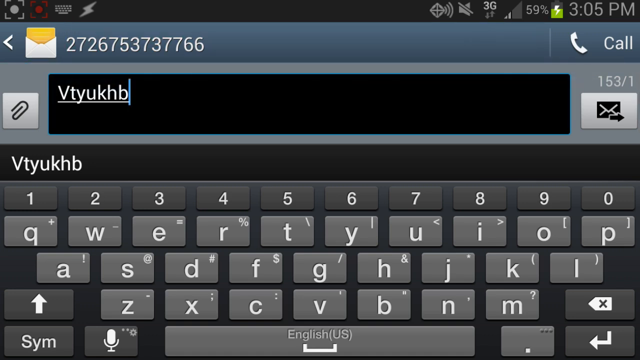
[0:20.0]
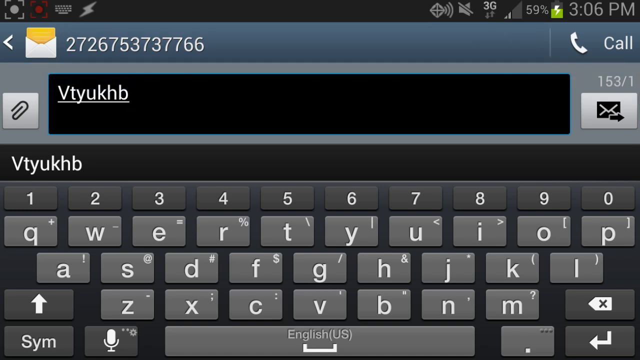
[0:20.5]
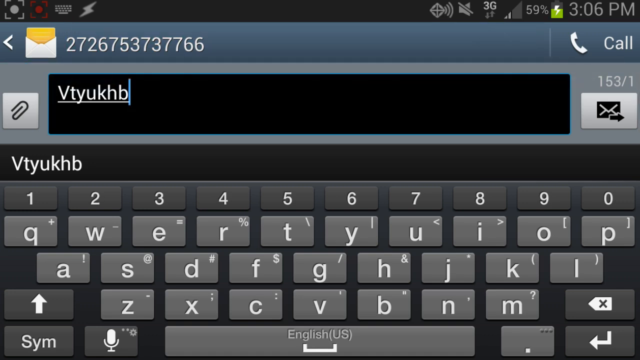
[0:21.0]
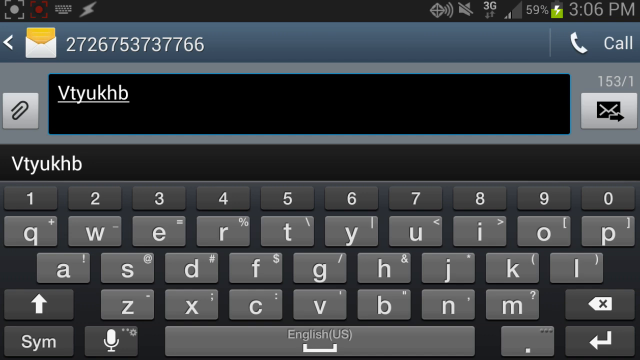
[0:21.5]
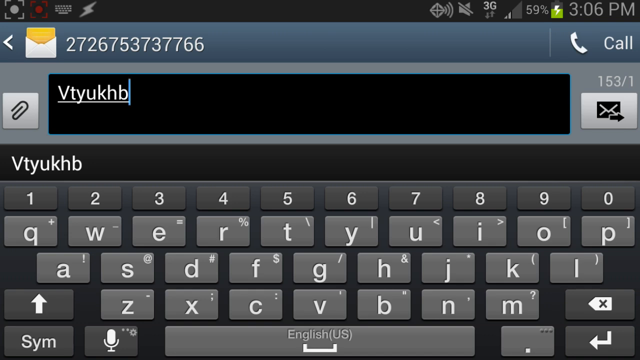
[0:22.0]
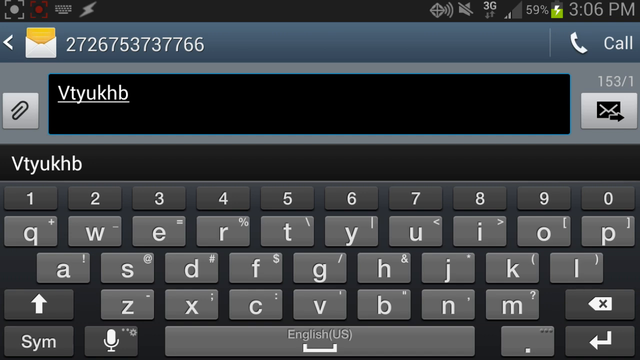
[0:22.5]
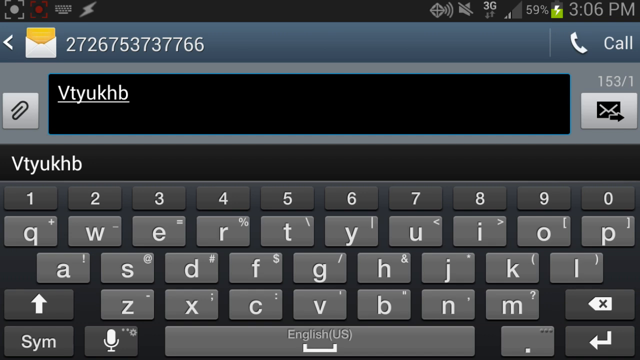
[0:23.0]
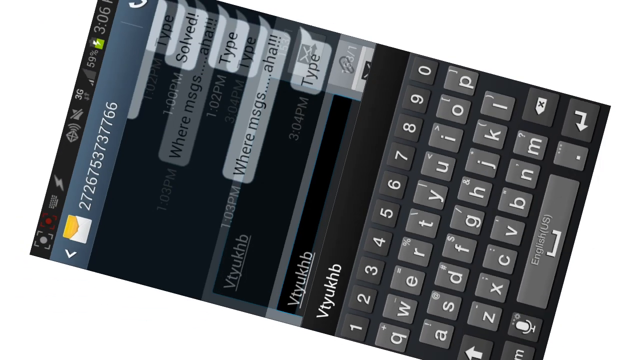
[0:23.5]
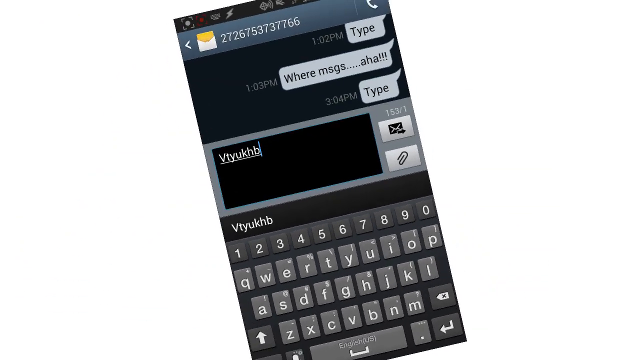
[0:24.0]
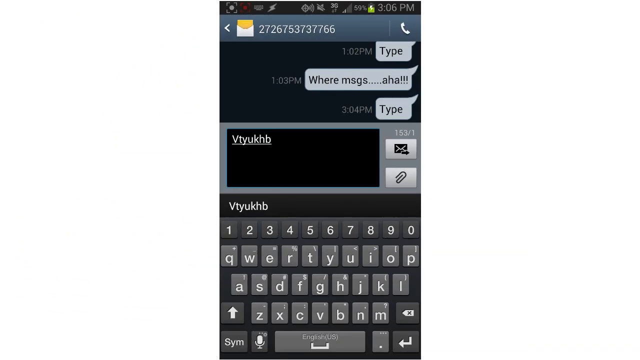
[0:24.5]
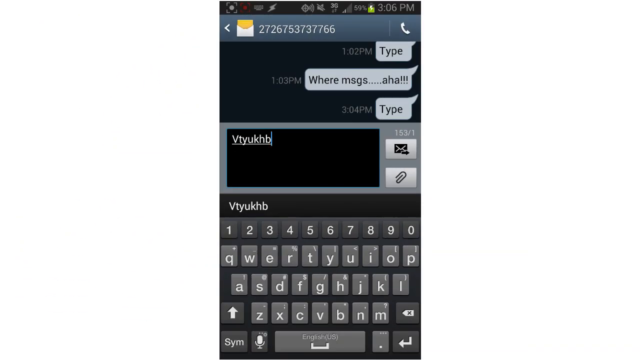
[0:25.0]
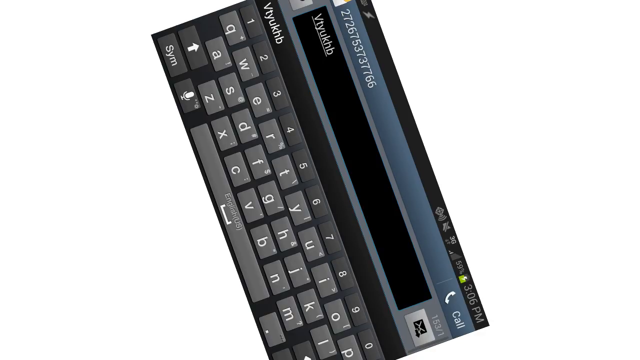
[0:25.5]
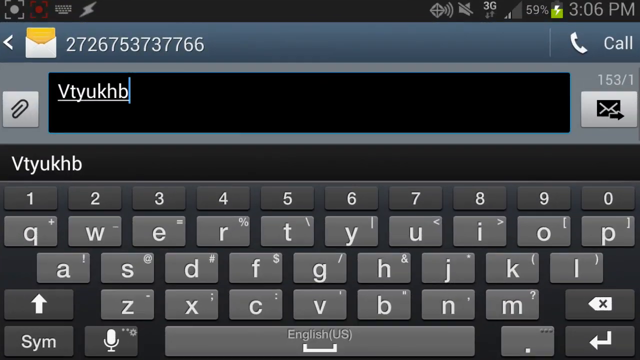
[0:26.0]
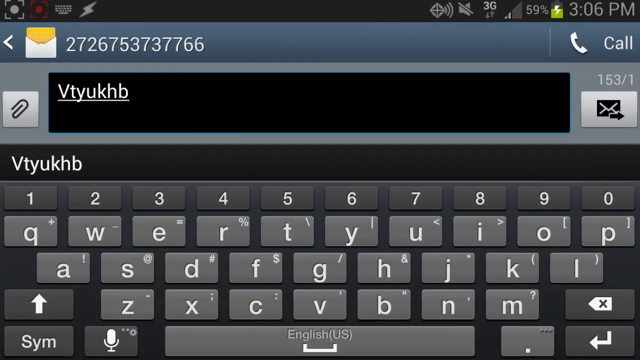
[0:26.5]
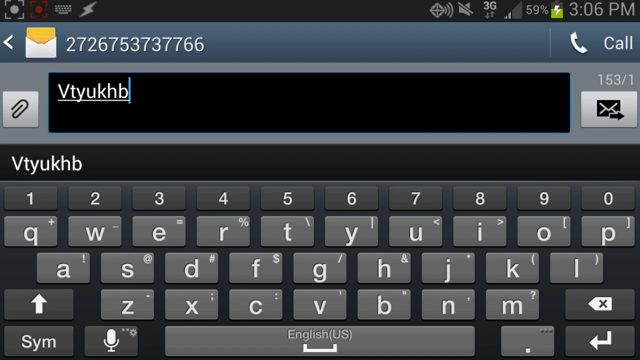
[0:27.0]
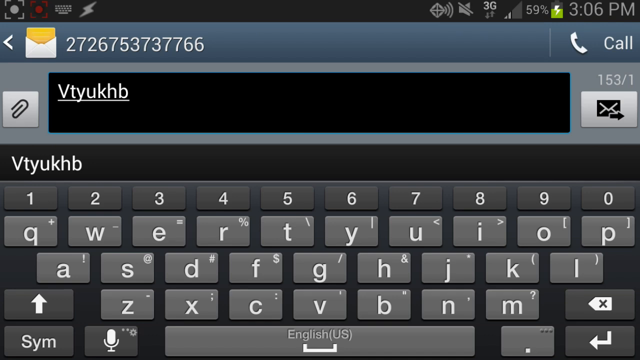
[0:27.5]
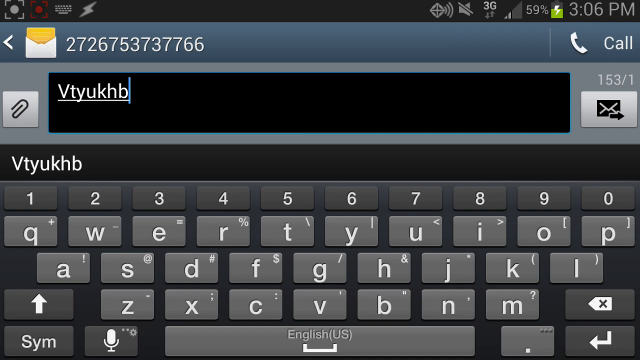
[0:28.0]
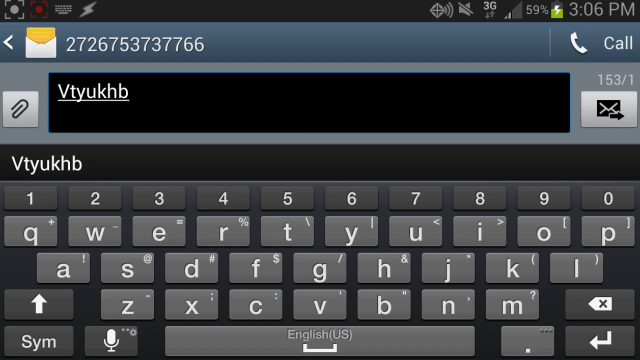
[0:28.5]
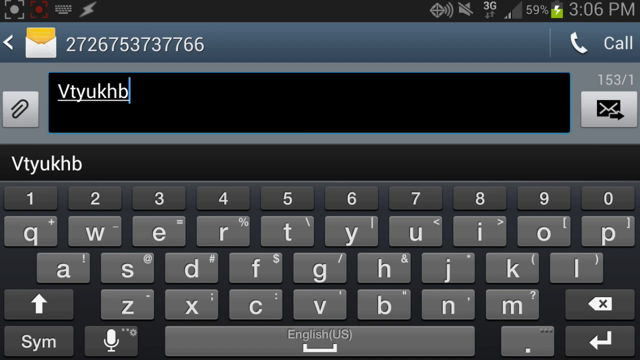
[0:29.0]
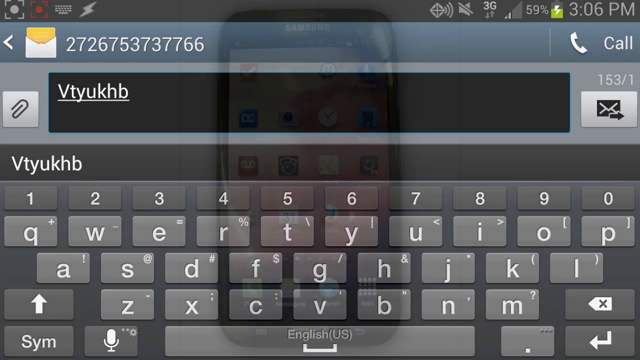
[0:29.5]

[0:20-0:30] Still in the horizontal orientation, typing continues. After a transition, possibly a built-in one, the screen is rotated back to vertical and the keyboard is still on screen. It is then put back into horizontal format. The image then transitions from the screen recording to what looks like footage of a real Samsung phone on a white surface background, with a few apps pinned at the bottom, such as Firefox, a camera app, a calendar and a contacts app.